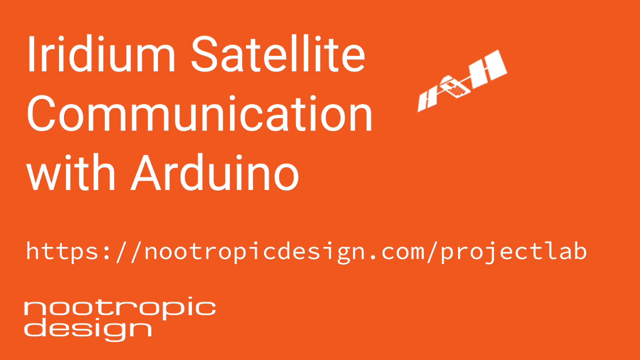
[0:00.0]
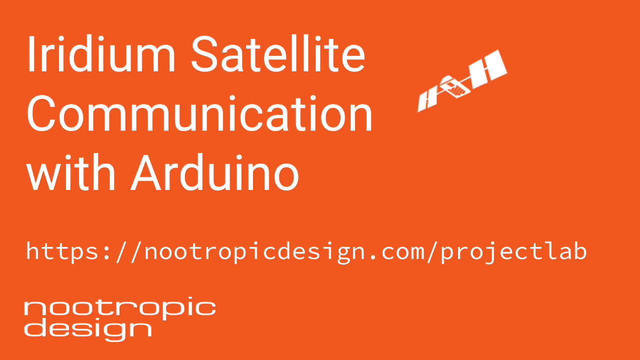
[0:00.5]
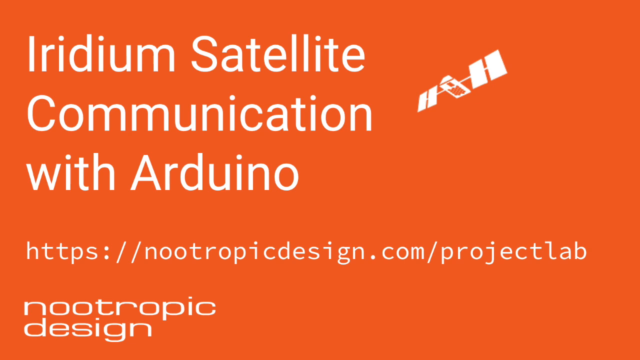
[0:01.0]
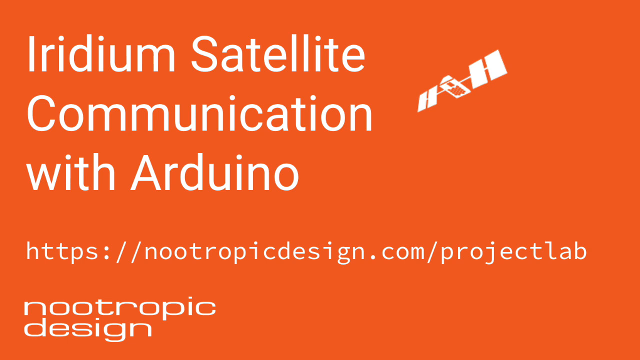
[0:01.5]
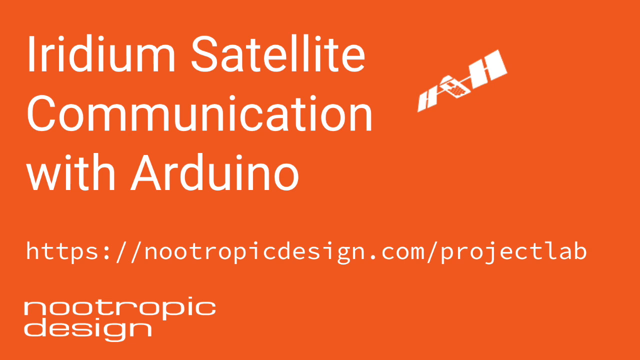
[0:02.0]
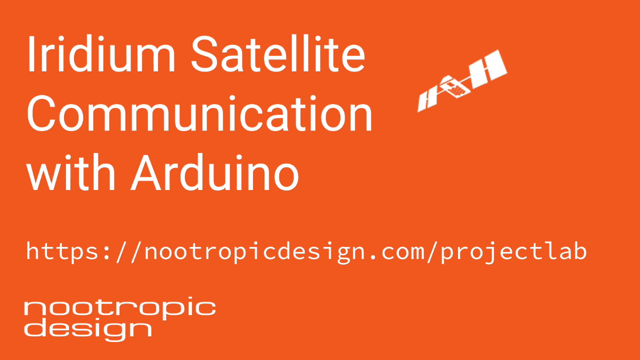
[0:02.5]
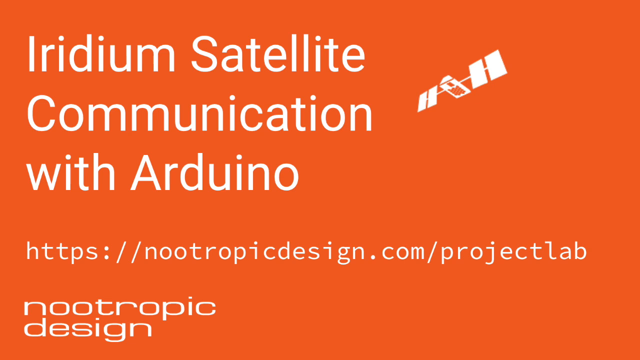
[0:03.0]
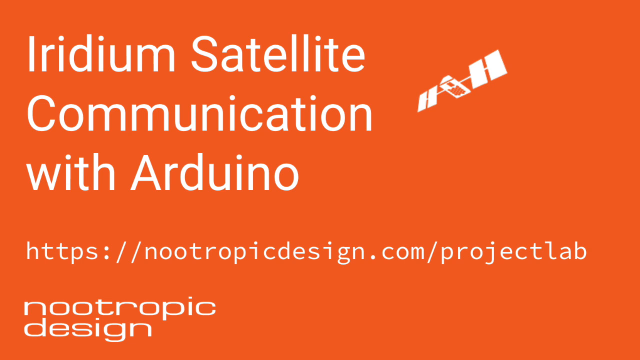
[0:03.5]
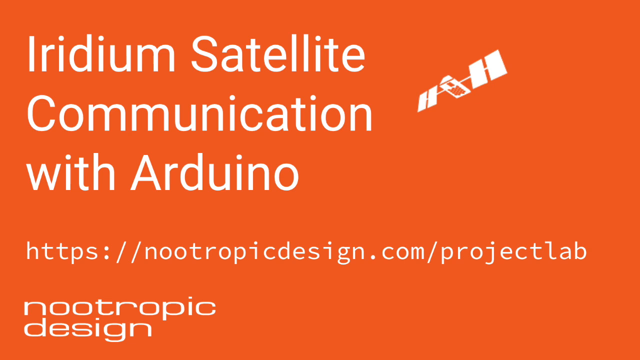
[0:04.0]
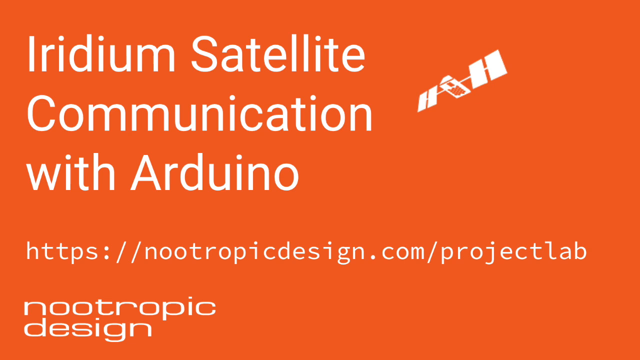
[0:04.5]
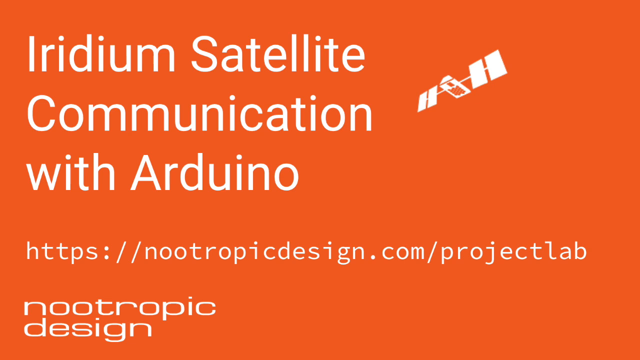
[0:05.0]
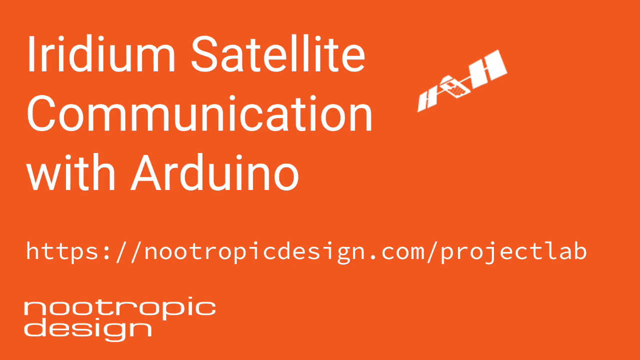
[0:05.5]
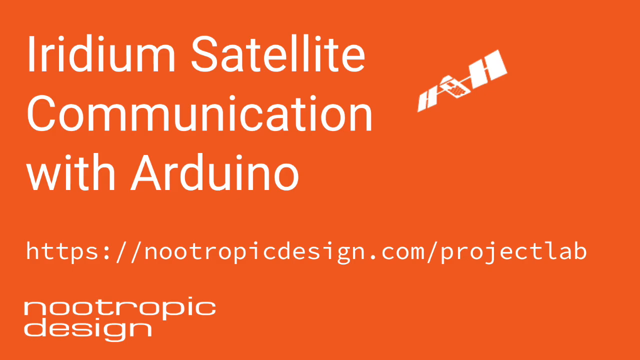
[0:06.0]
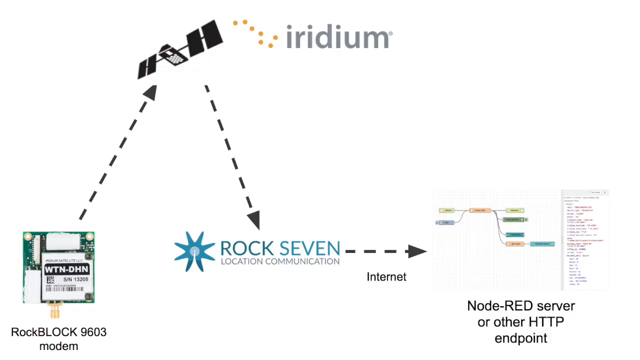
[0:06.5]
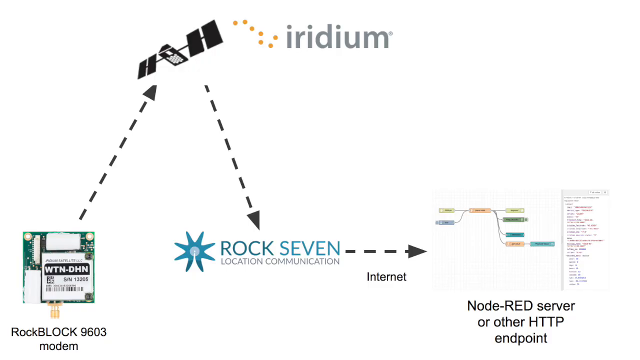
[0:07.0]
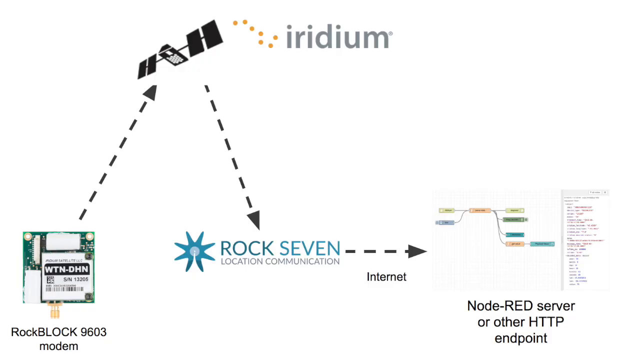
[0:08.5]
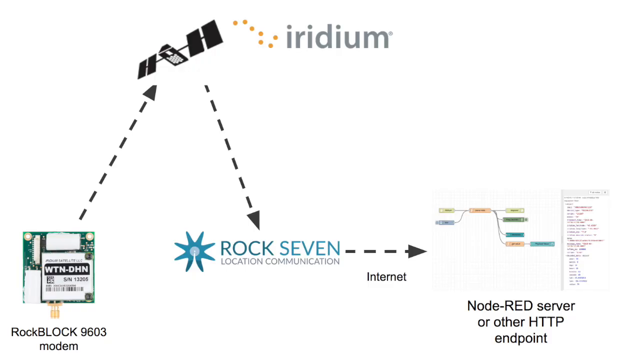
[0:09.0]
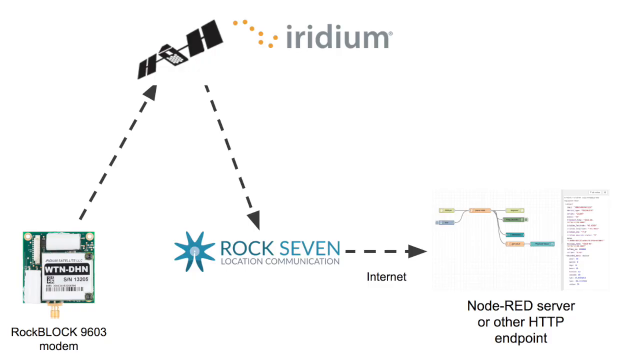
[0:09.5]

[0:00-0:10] The video opens on an all-orange background with big, bold white lettering in the left corner reading "Iridium satellite communication with Arduino," along with a small all-white diagram or outline of a satellite. Below that is a link to click to go to their website, and below that the text "new tropic design." The scene then changes to an all-white background with "Iridium" at the top. In the bottom left is a small, kind of disk-like object labeled below with "Rock Block 9603 Modem." A dotted arrow goes up to the right to a black satellite, and a dotted-line arrow goes down to the right to text reading "Rock 7 Location Communication." A dotted line then comes to an arrow point, labeled underneath "Internet," pointing to the right. Next is a small diagram, and at the bottom the text reads "Node-RED Server or Other HTTP Endpoint."